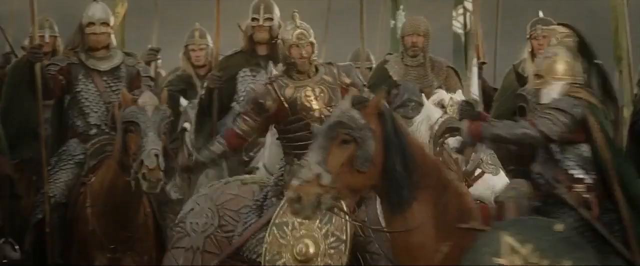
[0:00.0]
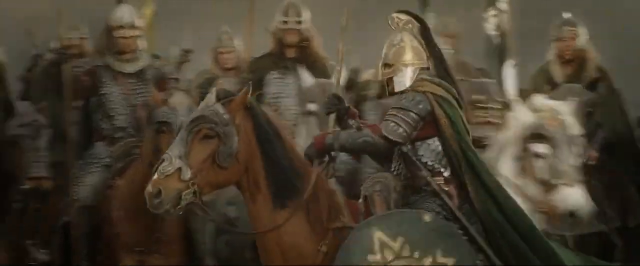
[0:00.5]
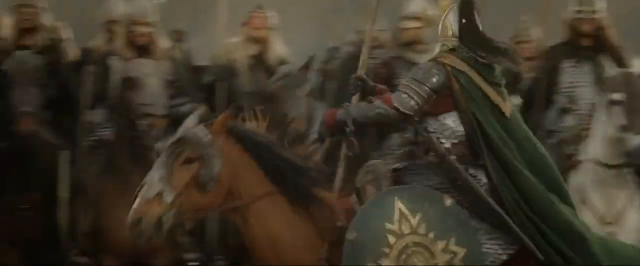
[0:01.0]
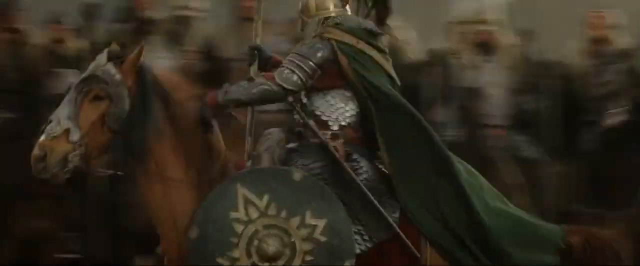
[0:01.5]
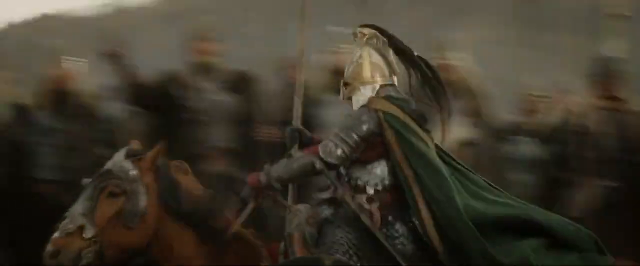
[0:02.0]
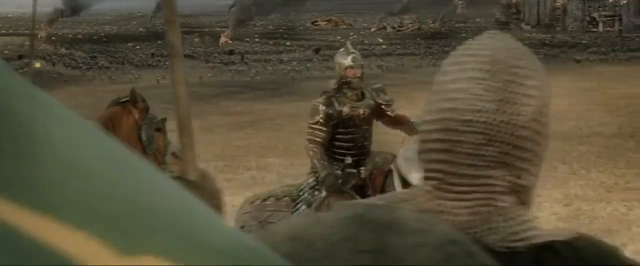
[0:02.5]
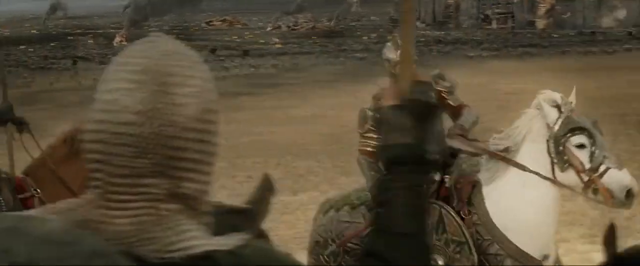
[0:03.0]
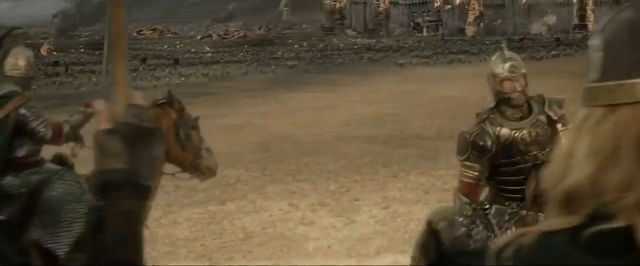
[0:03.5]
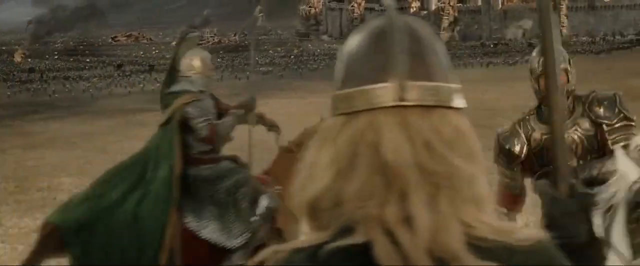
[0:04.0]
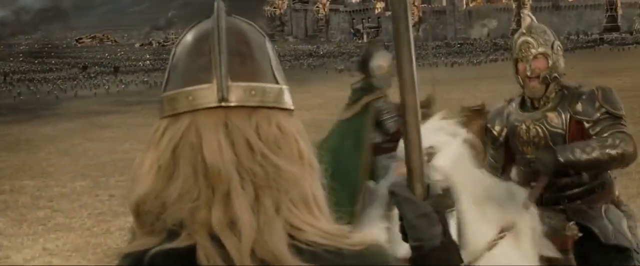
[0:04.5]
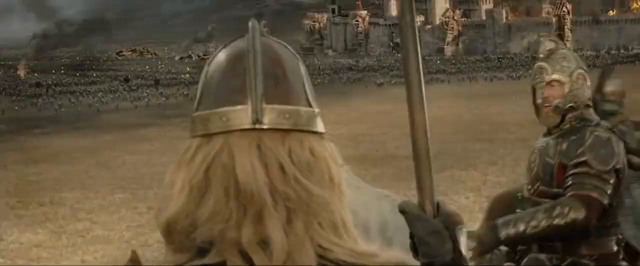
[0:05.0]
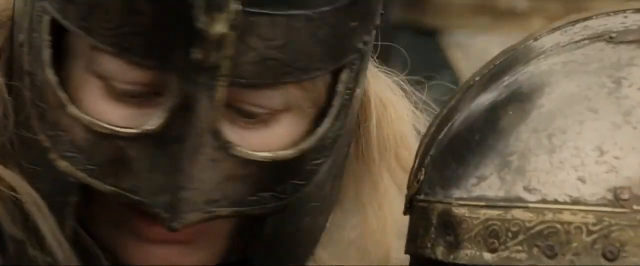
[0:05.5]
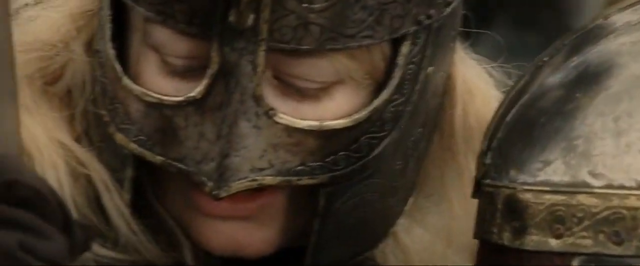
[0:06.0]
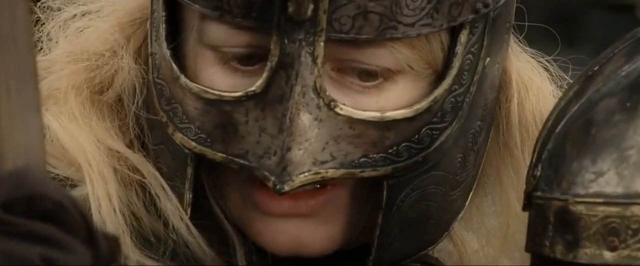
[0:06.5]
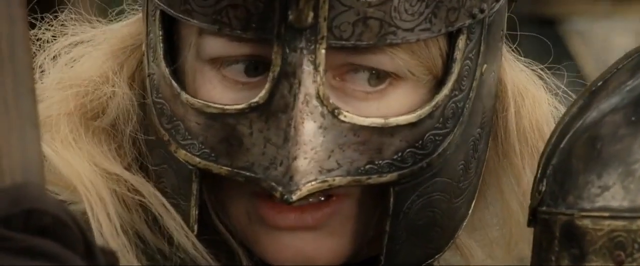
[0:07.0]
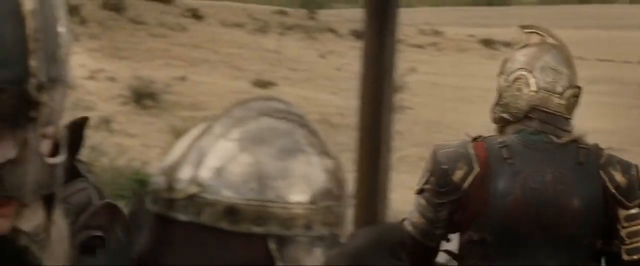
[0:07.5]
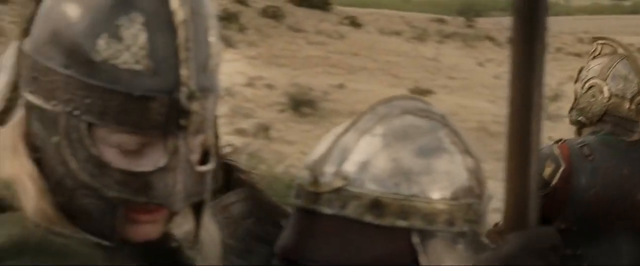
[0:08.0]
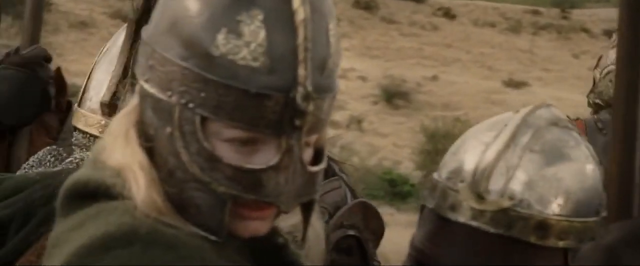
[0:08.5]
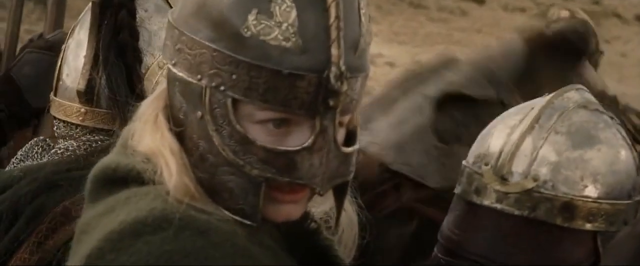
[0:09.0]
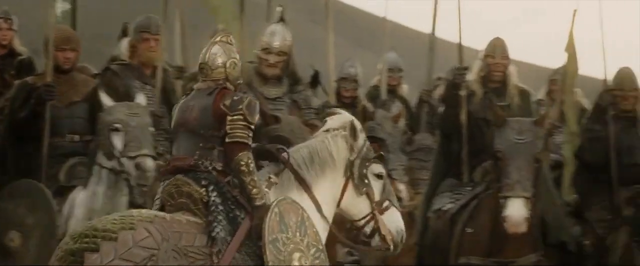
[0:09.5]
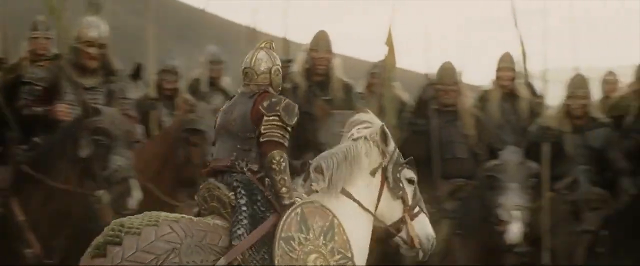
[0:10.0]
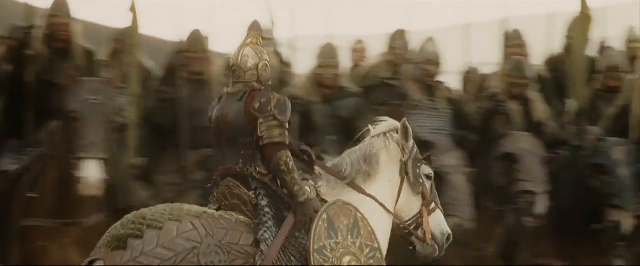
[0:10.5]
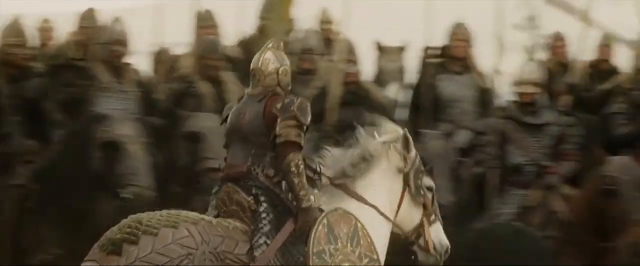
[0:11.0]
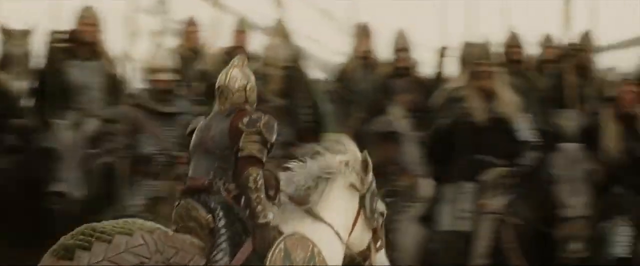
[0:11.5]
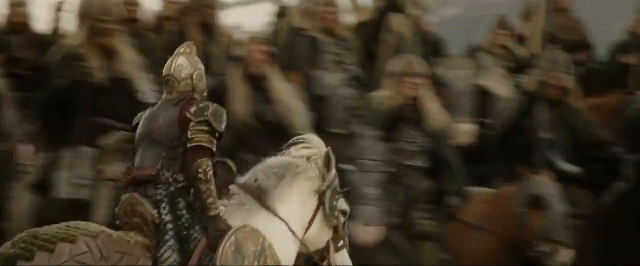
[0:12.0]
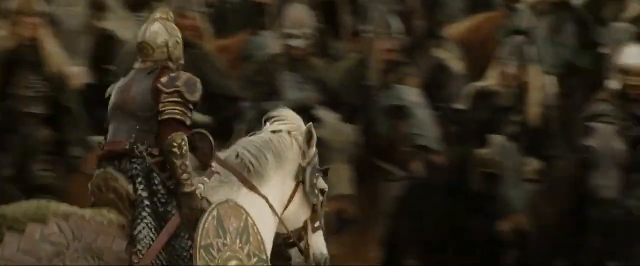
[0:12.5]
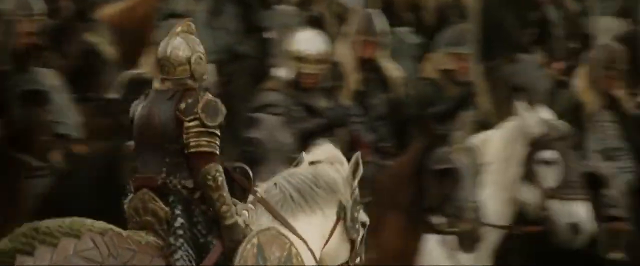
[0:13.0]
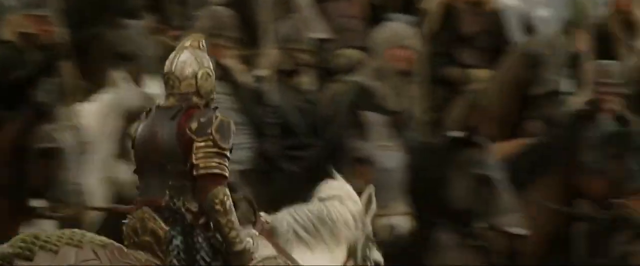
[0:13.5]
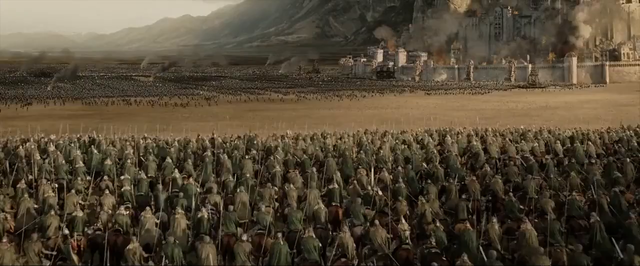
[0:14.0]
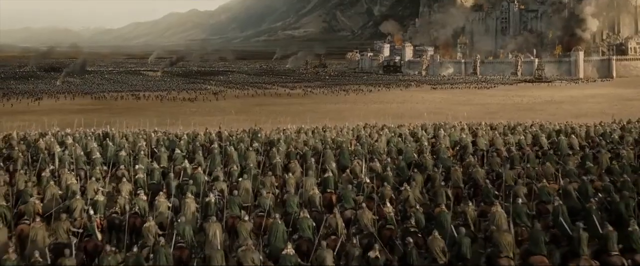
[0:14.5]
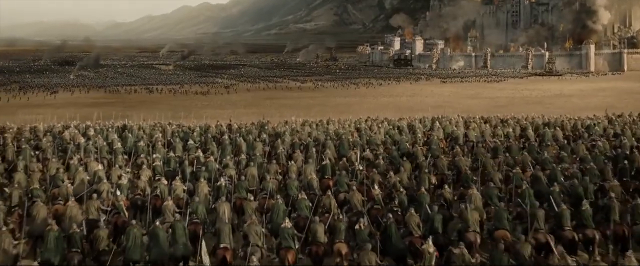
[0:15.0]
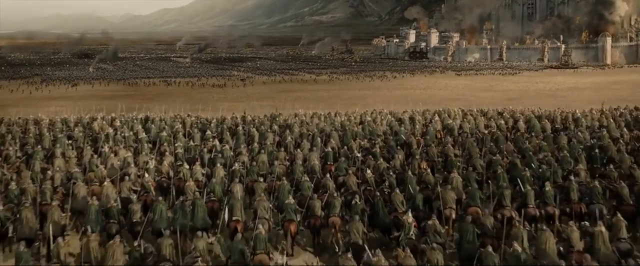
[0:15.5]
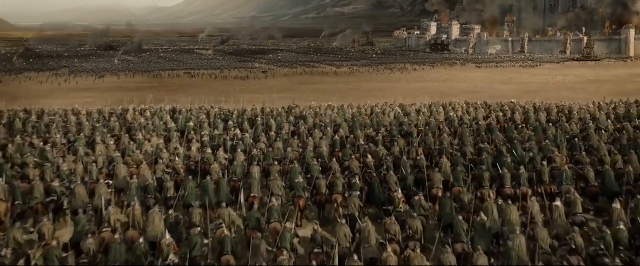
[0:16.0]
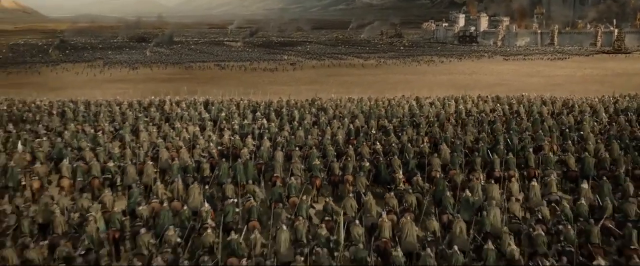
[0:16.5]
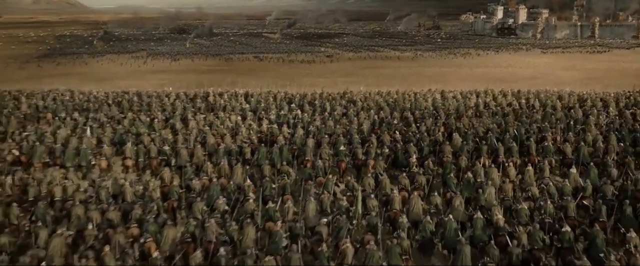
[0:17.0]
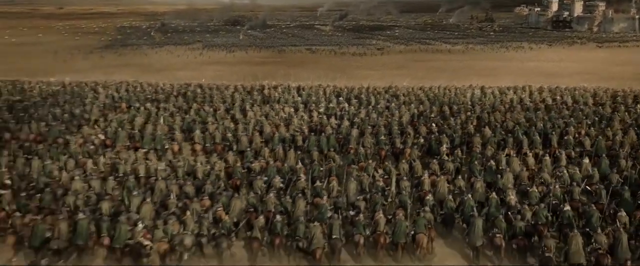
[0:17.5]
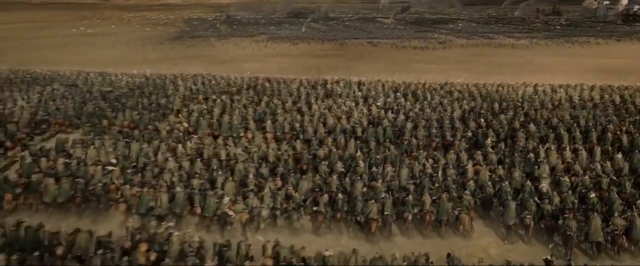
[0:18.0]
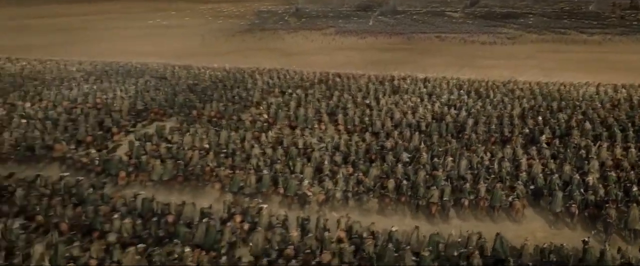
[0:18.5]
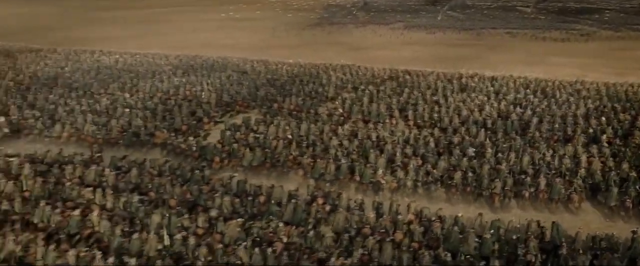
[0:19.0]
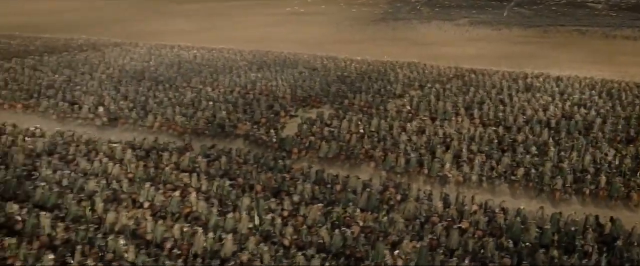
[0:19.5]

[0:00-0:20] The footage appears to be from one of the Lord of the Rings films and shows an army. An armored man on a horse rides from right to left for a few seconds, then the shot cuts to a view from behind the man. In front of them are two people on horses, both fully armored, speaking to the army. It abruptly cuts to someone in the army, a fully armored woman who is hiding and hiding her face. It cuts back to a man on a white horse riding from left to right for a few seconds. A wide shot of the army follows; in the distance is another army, with a walled city in the background. The camera slowly pans backward to show the massive size of these armies.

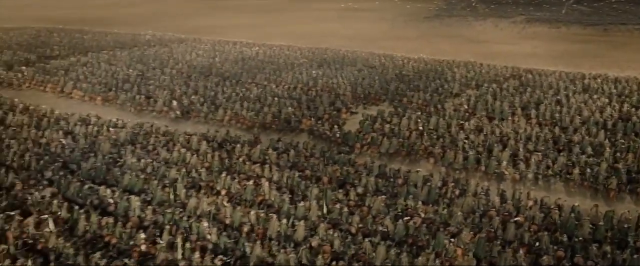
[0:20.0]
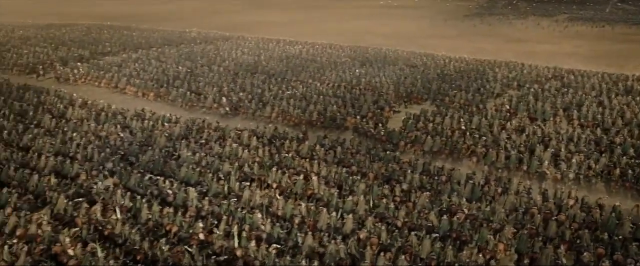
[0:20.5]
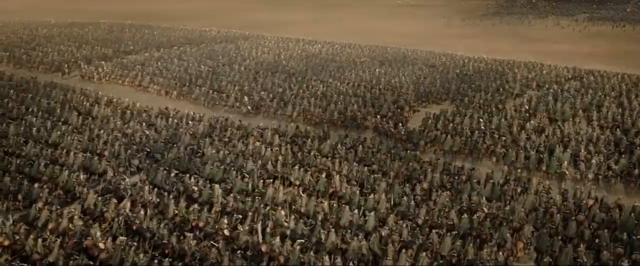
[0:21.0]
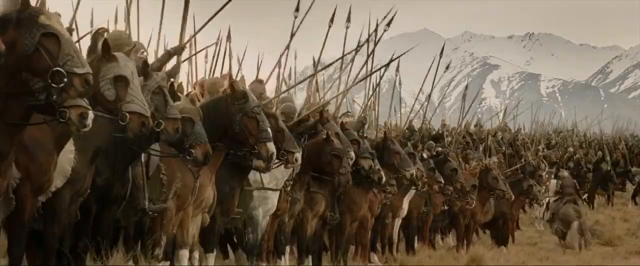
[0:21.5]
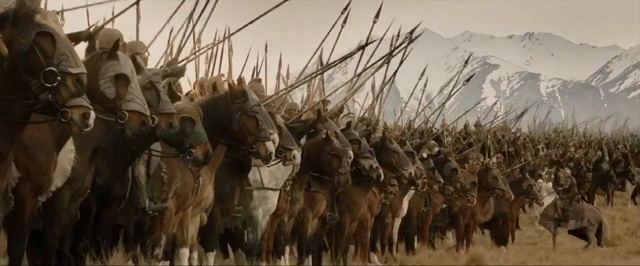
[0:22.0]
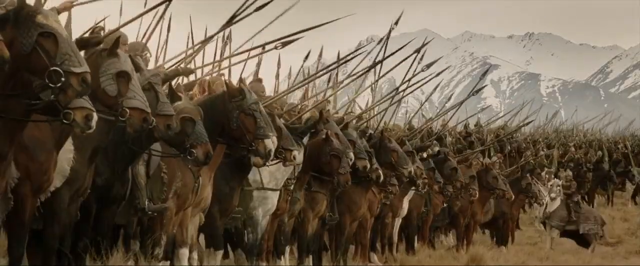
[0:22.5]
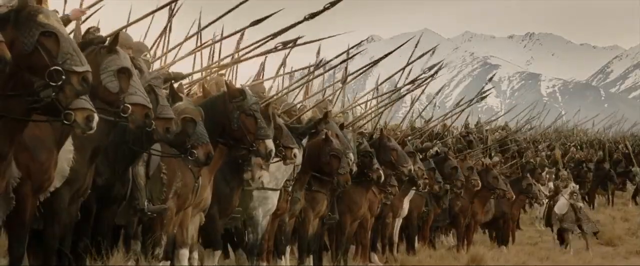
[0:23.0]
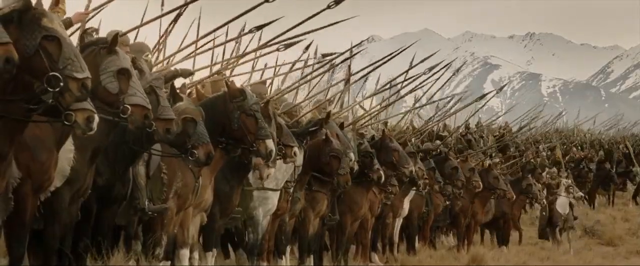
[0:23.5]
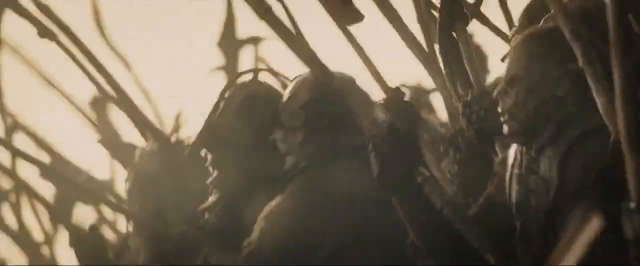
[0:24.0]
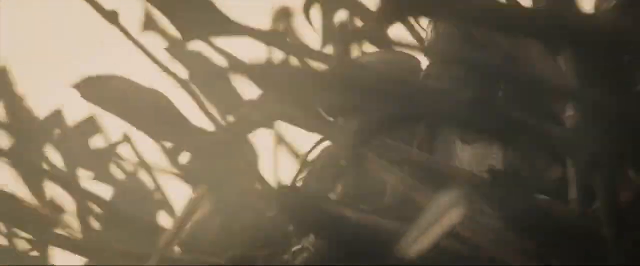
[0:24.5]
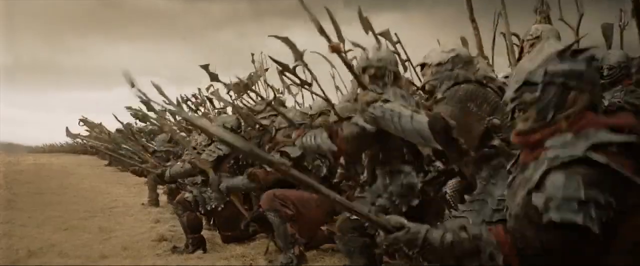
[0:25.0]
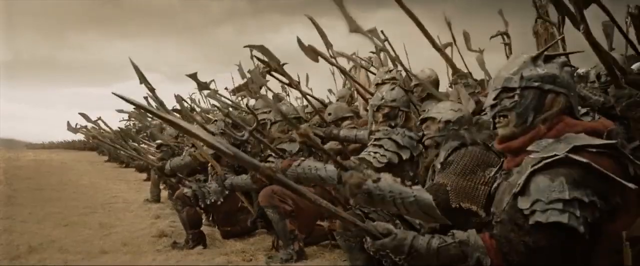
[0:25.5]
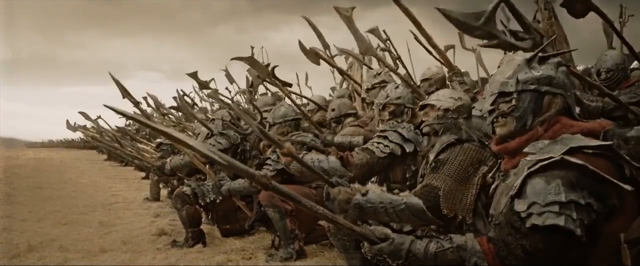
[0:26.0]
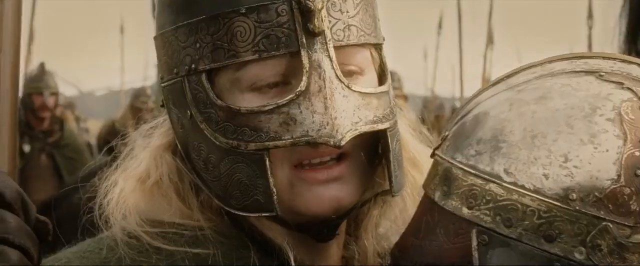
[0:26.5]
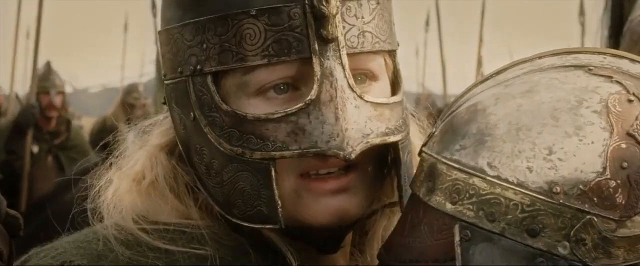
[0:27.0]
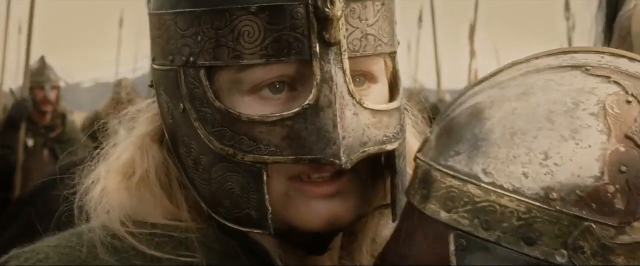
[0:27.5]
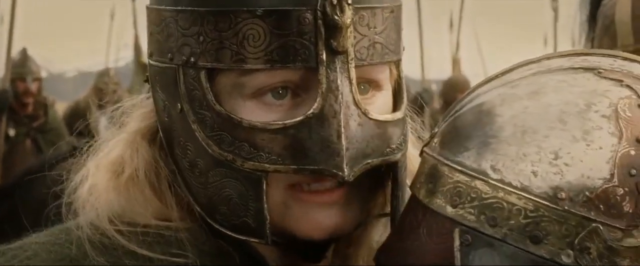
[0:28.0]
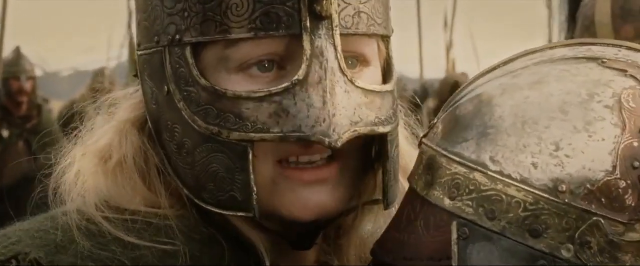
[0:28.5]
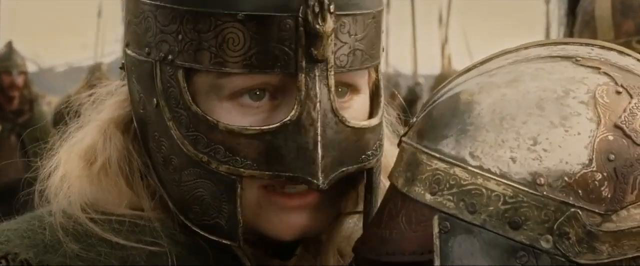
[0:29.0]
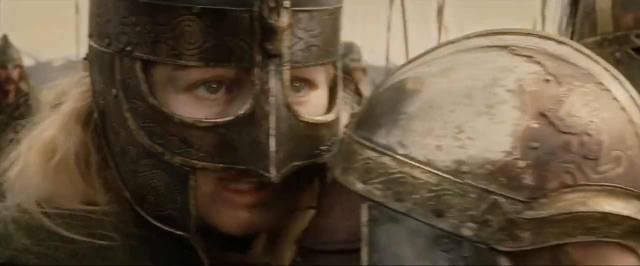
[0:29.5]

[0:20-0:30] The footage appears to be from a Lord of the Rings film. It opens with a high, wide shot of massive armies, then cuts to a front long shot of one of these armies. All the men are atop horses, brandishing spears and lowering them, ready for battle. It cuts to the opposing army of orcs, also brandishing weapons; the front line of orcs crouches, also preparing for battle. It then cuts back to the woman disguised in the army, who seems worried and is speaking to a smaller person in front of her on her horse.